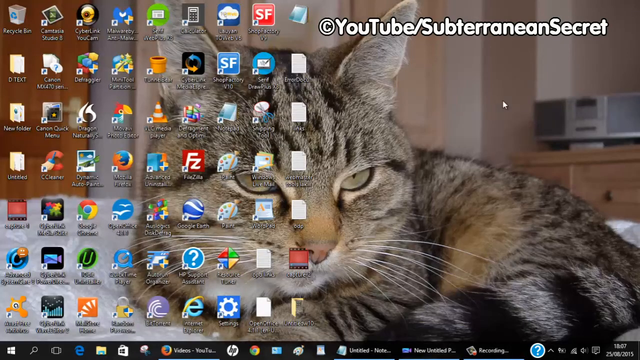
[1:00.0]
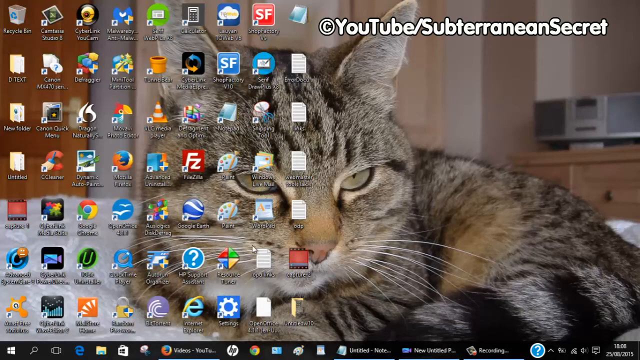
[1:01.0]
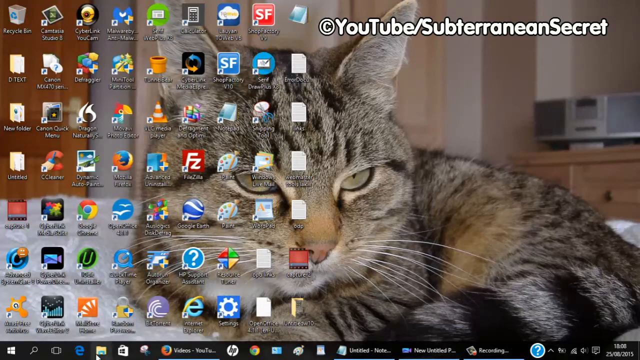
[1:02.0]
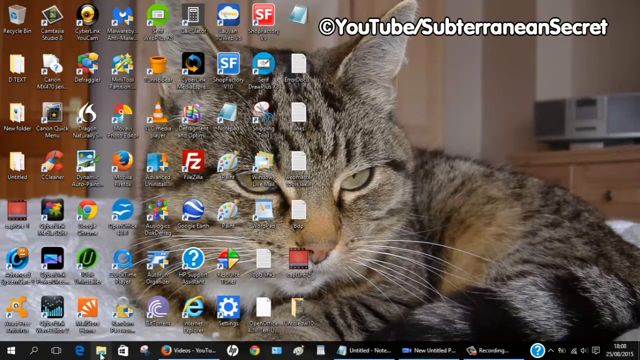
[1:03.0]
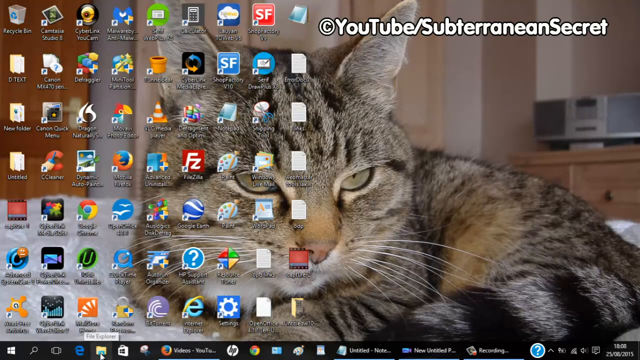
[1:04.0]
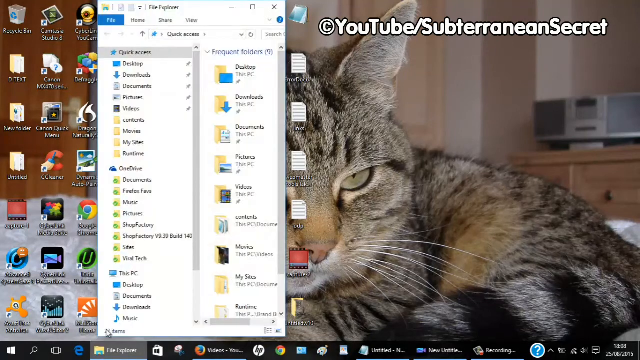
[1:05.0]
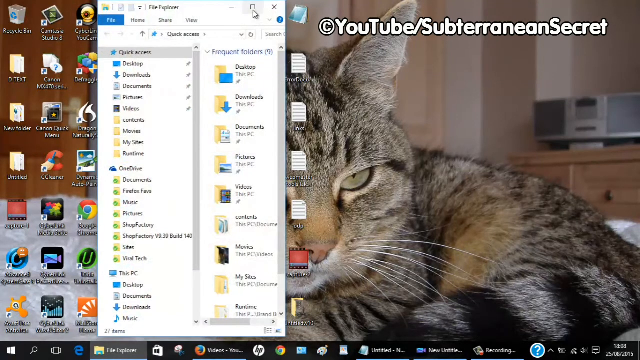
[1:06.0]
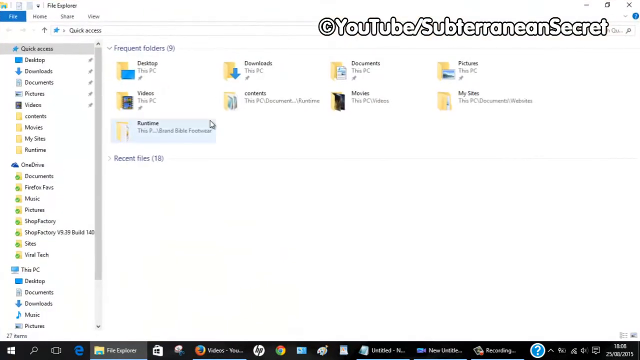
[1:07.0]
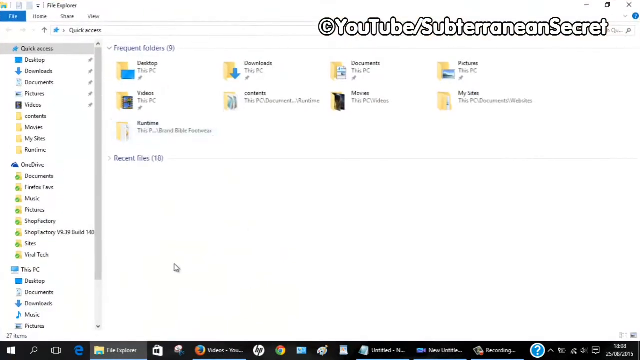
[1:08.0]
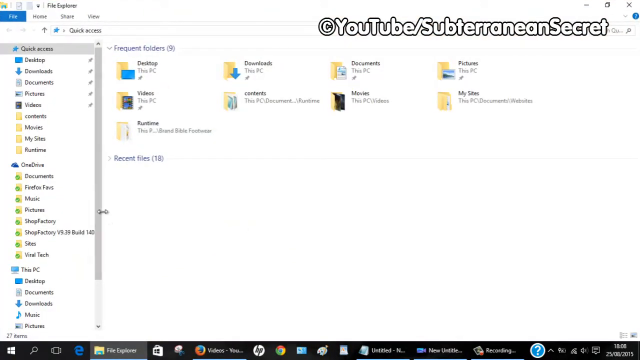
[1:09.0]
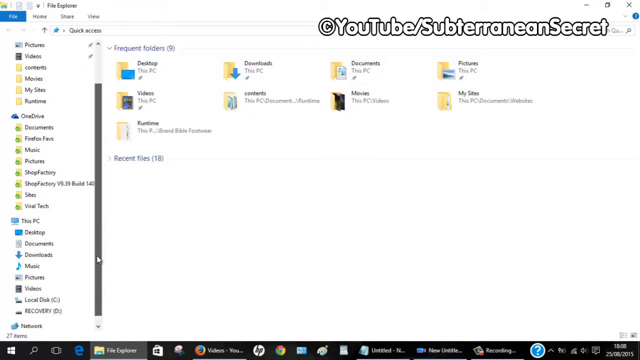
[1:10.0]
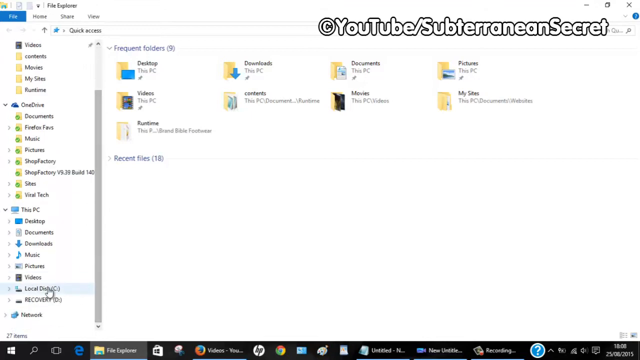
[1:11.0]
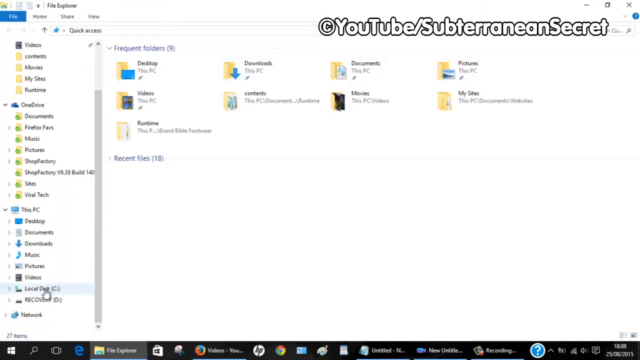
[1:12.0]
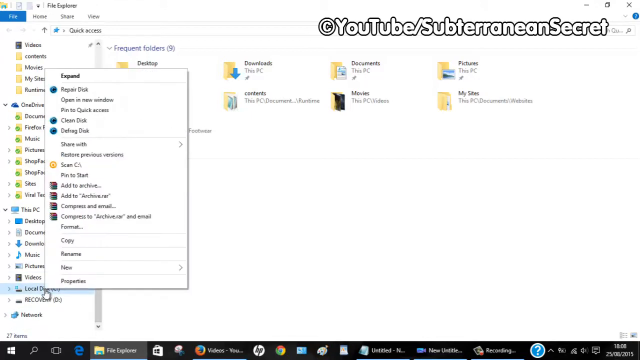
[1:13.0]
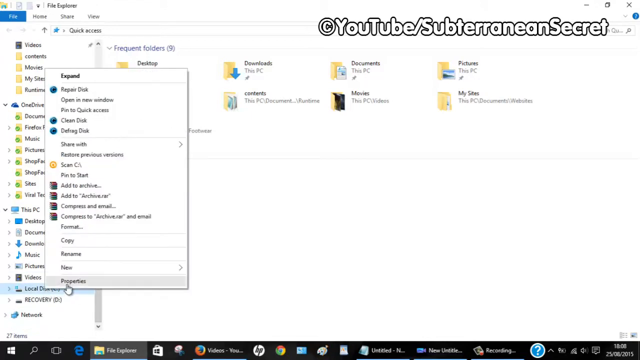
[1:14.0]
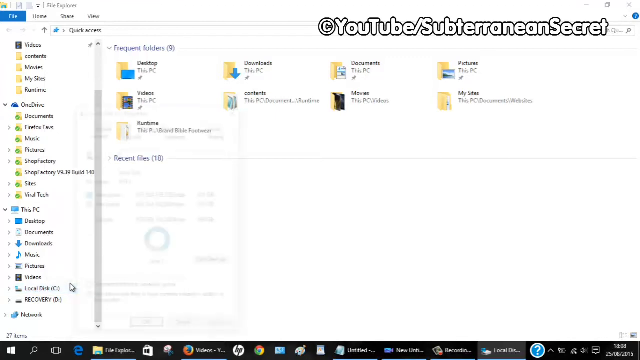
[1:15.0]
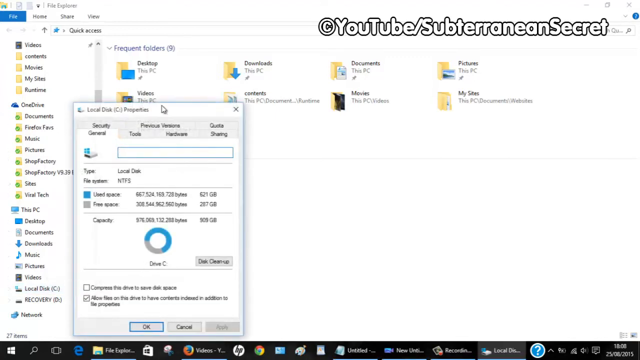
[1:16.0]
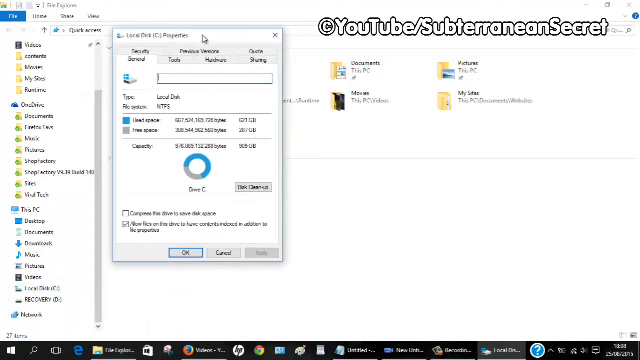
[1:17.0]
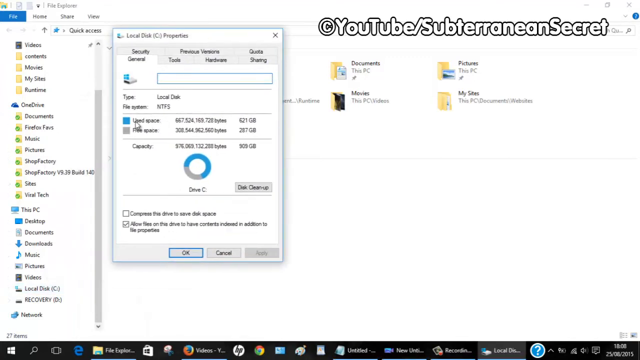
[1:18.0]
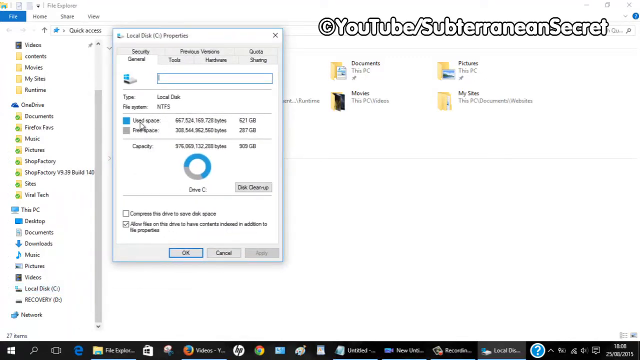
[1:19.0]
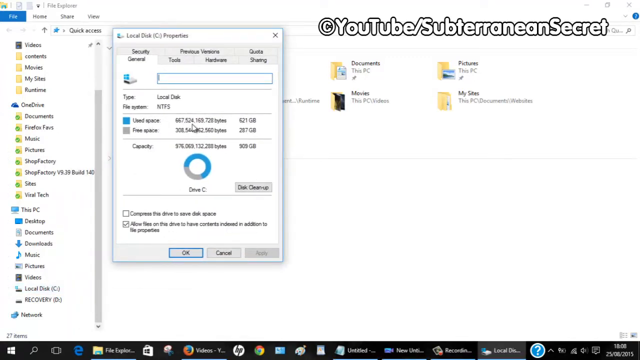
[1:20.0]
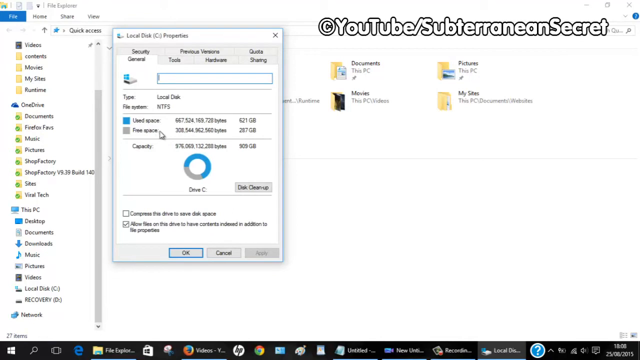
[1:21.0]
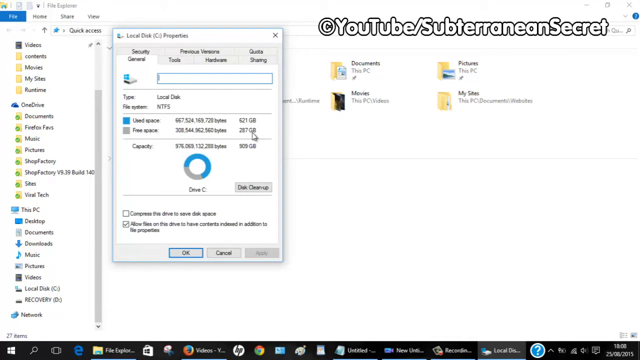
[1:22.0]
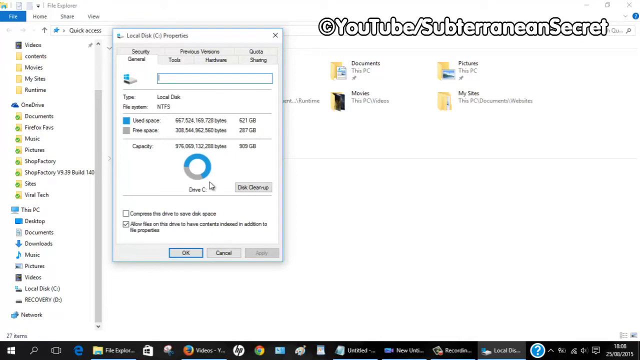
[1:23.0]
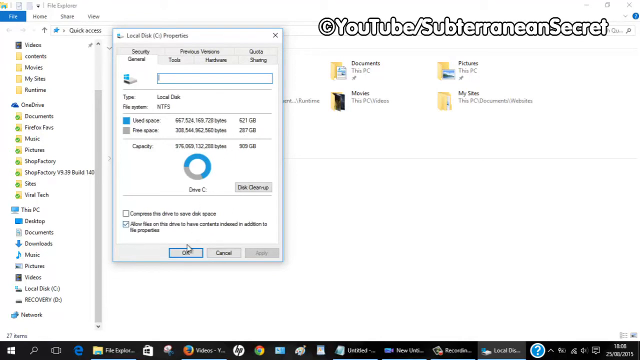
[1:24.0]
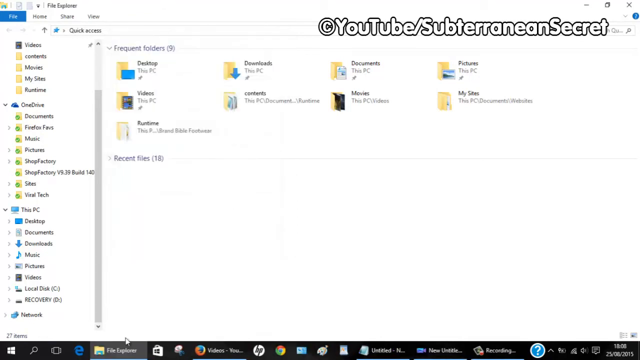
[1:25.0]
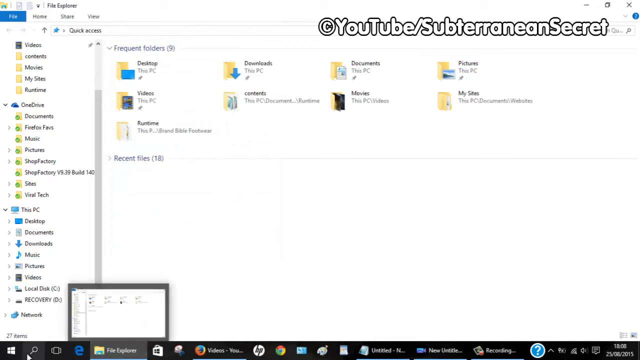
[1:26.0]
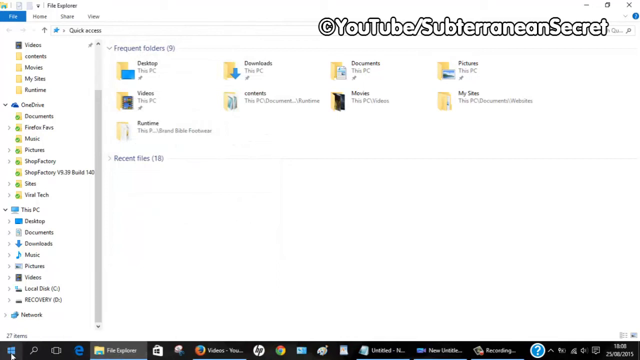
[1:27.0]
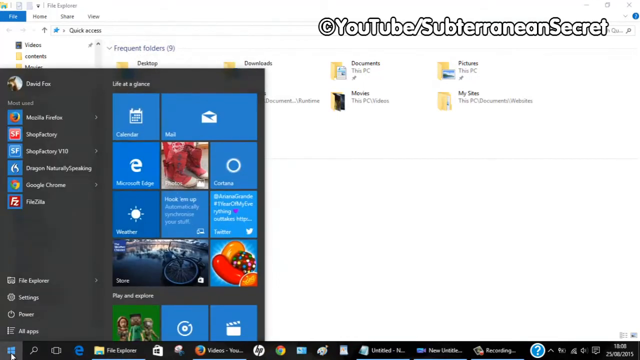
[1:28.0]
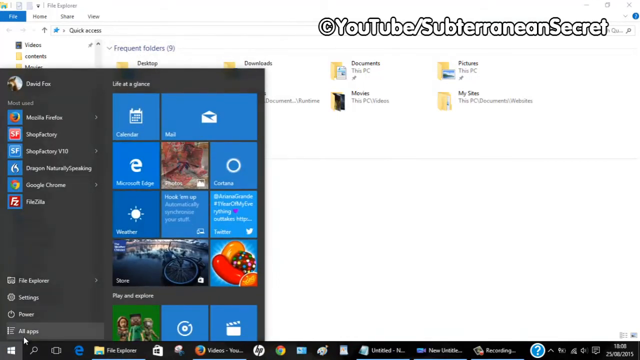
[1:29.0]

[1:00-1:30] The storage tab is clicked, and on the right two icons appear under storage: this PC, which is the C drive, and the recovery drive, which is the D drive. A blue horizontal line on each shows how much storage is used: 623 gigabytes used out of 911 gigabytes for this PC, and 17.6 gigabytes used out of 20.1 gigabytes for recovery. Underneath are other menu options such as save locations, "change where your apps, documents, music, pictures and videos are saved by default." The user then goes back to the home screen with the wallpaper, opens the File Explorer menu and scrolls down to local disk C drive. They right-click and select properties, and a small pop-up window appears; the cursor underscores the used space, which says "667million bytes used." They close the pop-up window and click on the Windows icon again.